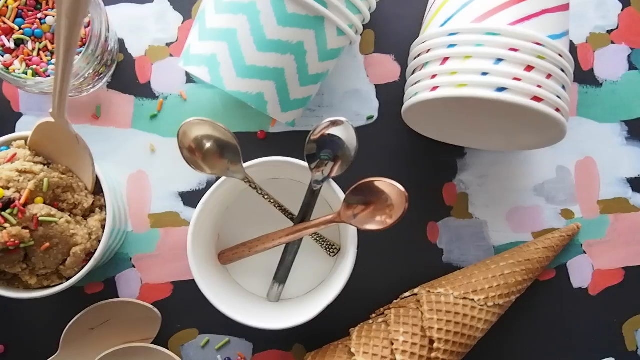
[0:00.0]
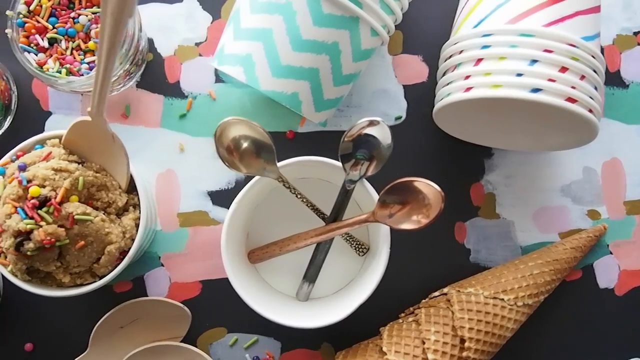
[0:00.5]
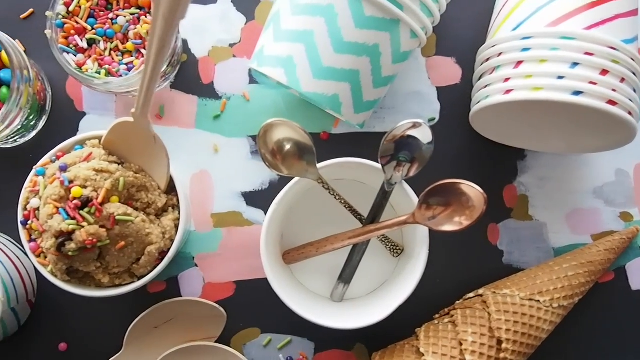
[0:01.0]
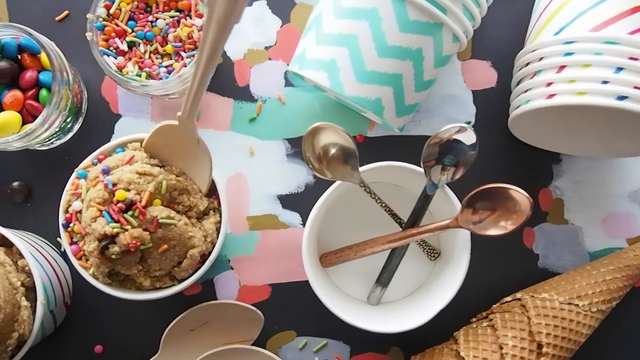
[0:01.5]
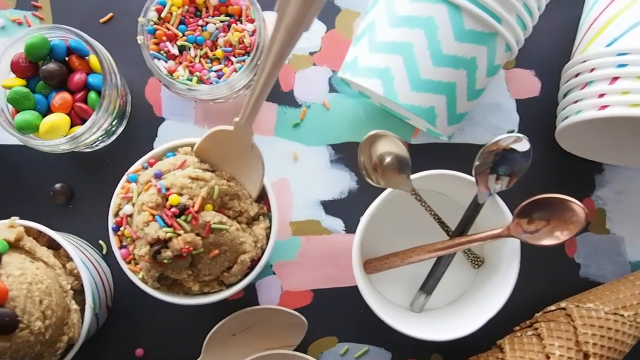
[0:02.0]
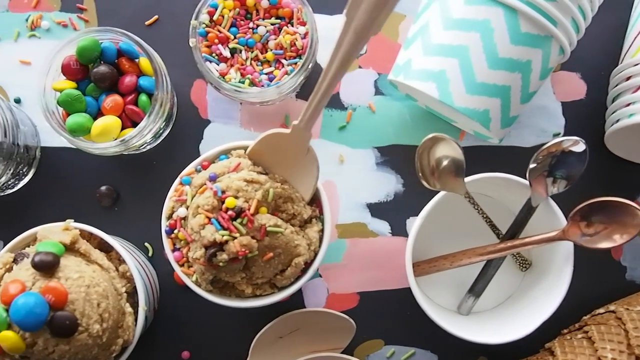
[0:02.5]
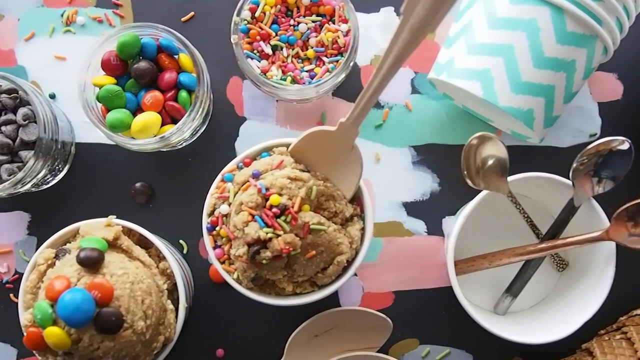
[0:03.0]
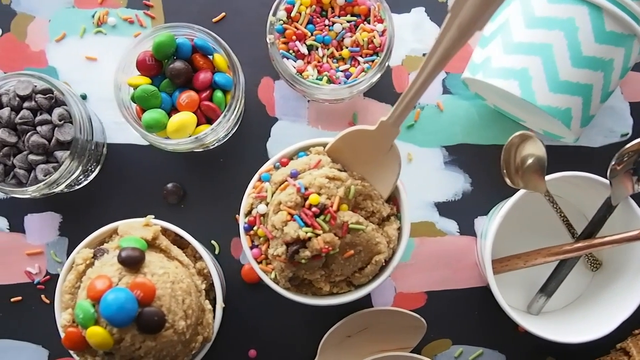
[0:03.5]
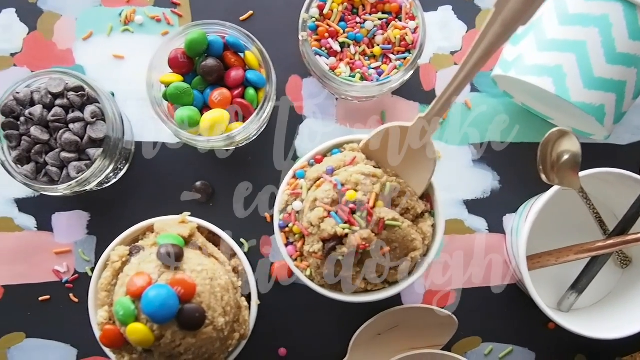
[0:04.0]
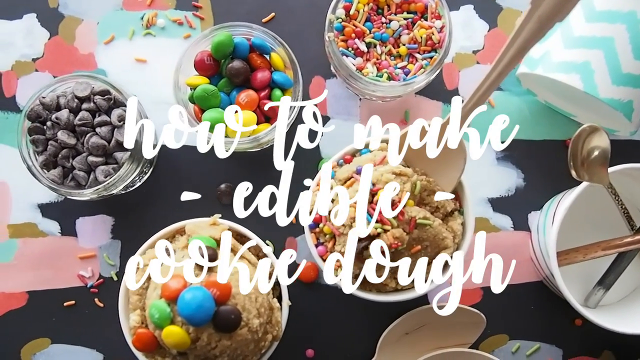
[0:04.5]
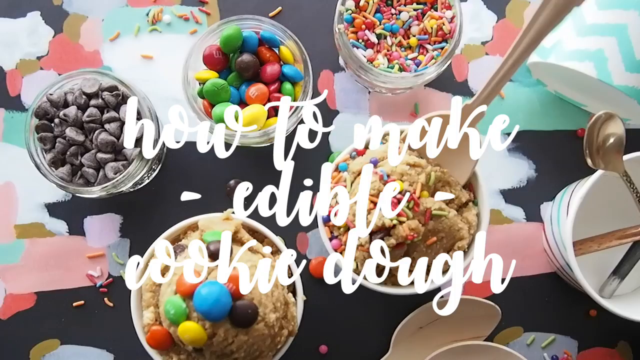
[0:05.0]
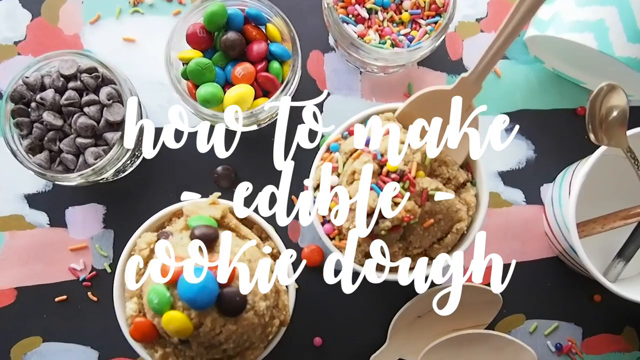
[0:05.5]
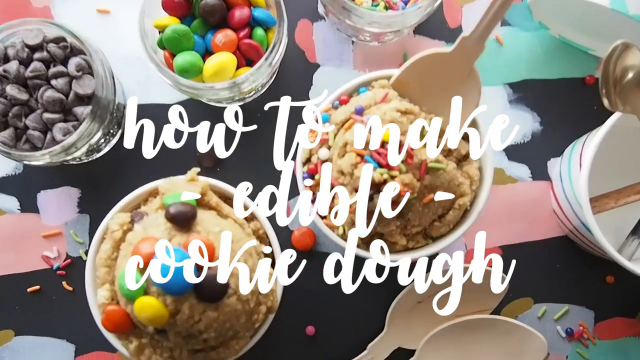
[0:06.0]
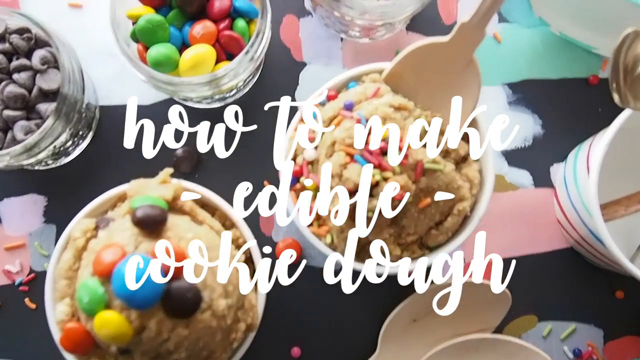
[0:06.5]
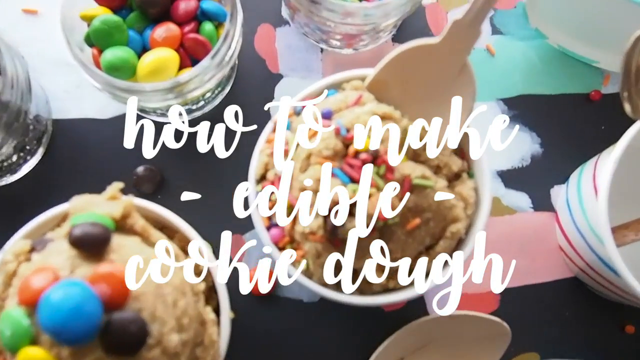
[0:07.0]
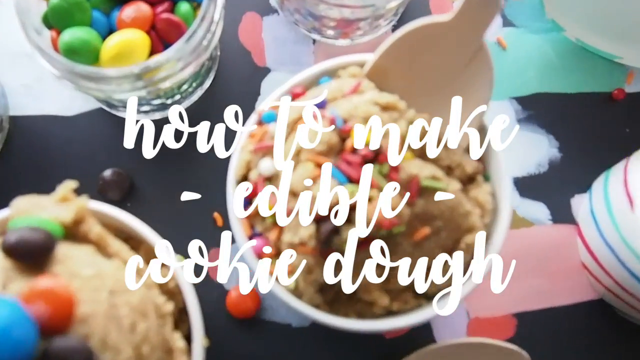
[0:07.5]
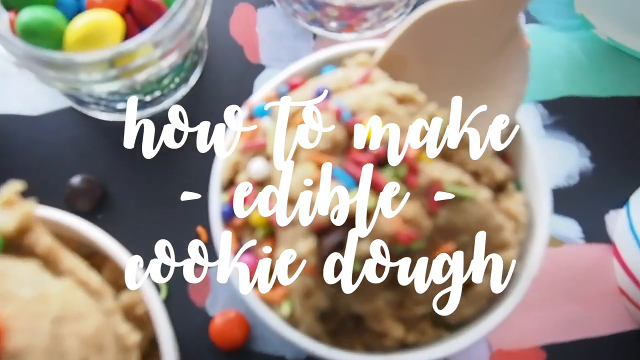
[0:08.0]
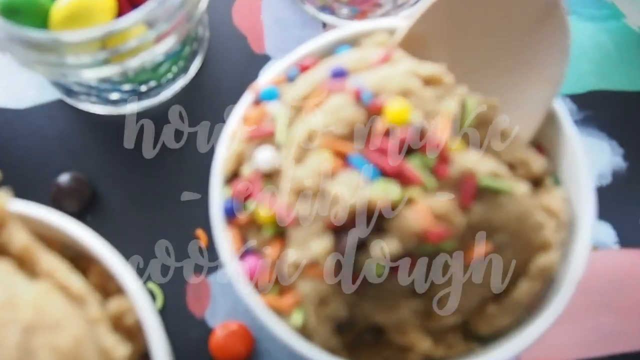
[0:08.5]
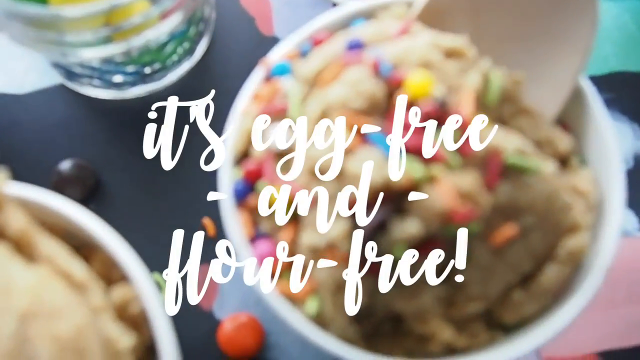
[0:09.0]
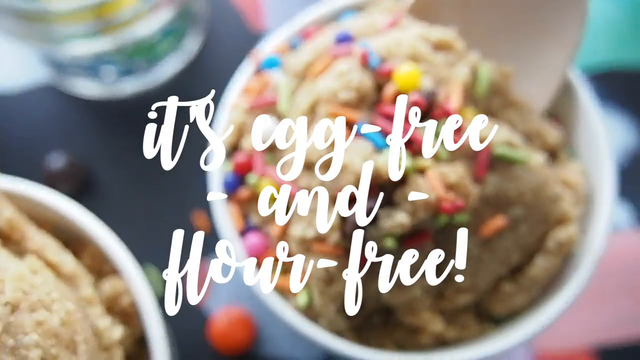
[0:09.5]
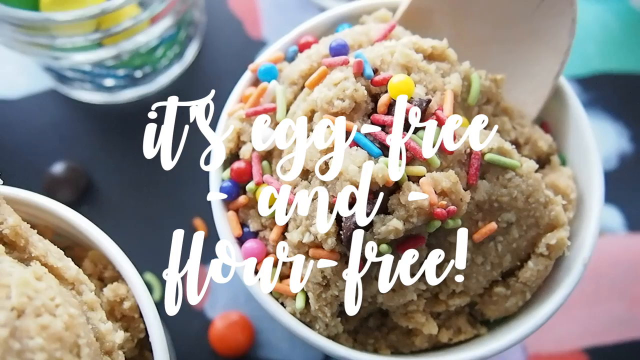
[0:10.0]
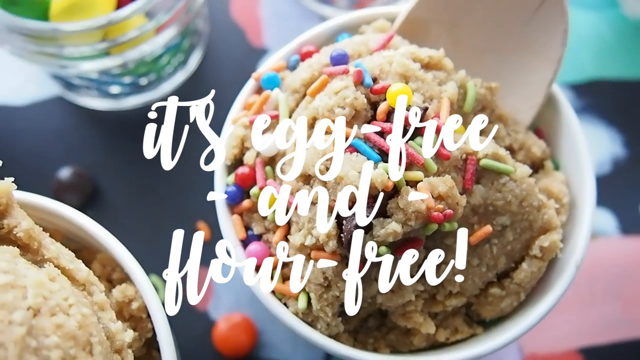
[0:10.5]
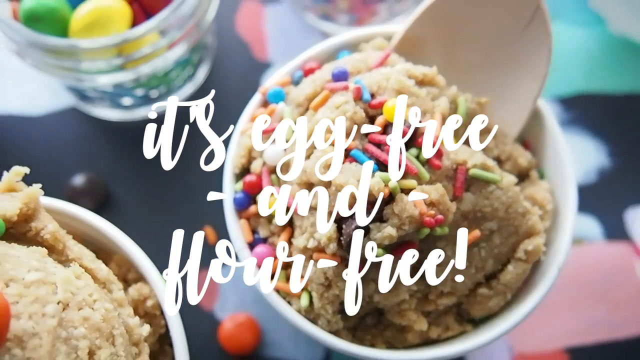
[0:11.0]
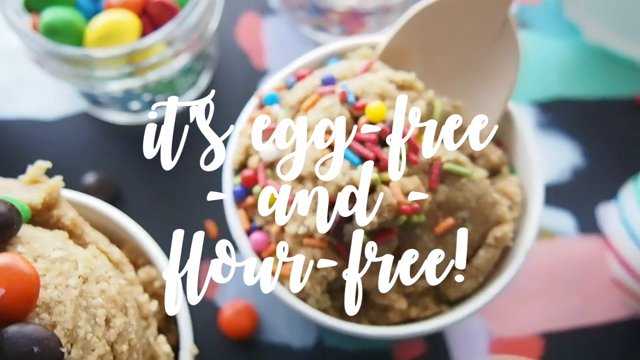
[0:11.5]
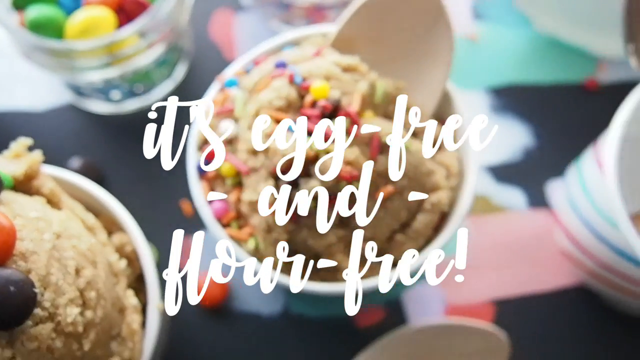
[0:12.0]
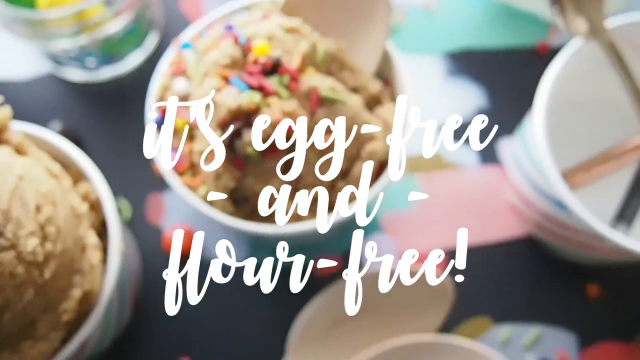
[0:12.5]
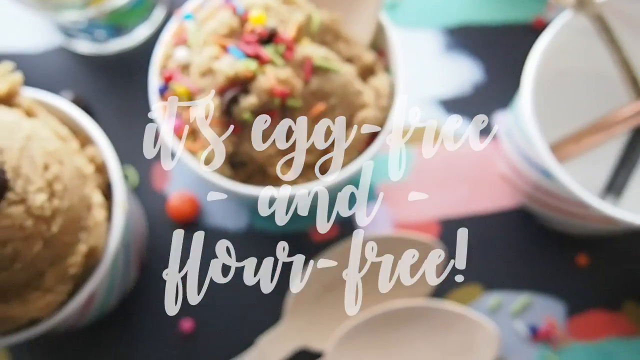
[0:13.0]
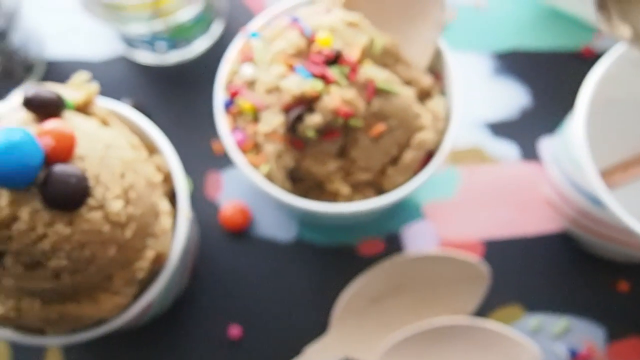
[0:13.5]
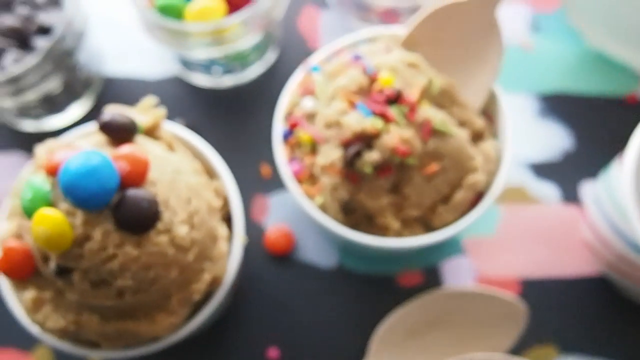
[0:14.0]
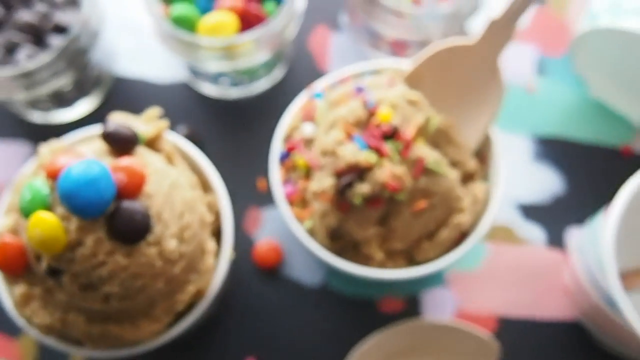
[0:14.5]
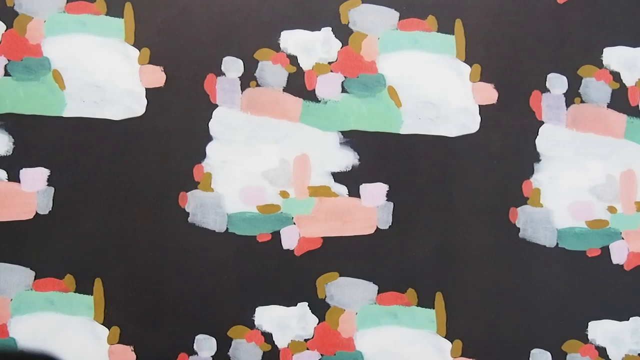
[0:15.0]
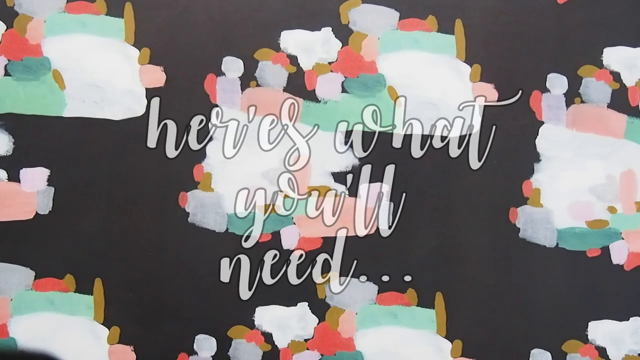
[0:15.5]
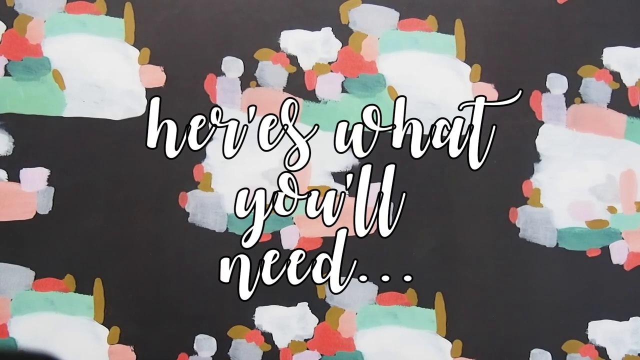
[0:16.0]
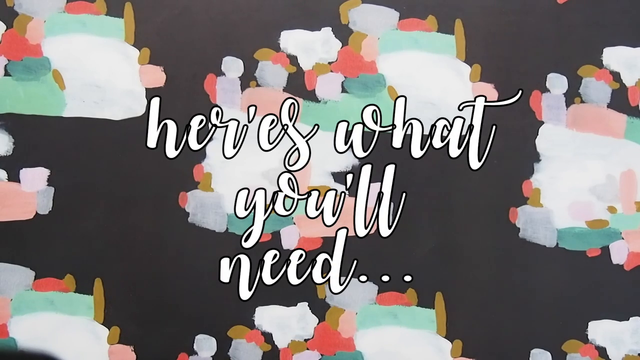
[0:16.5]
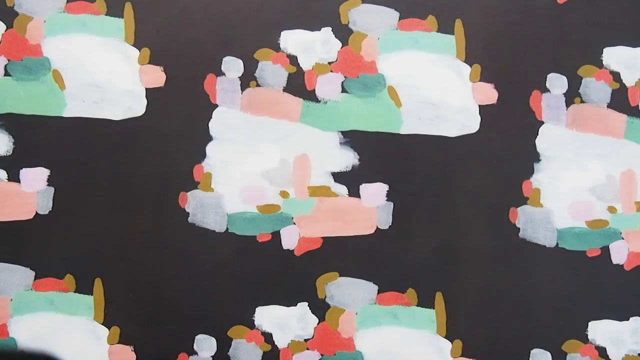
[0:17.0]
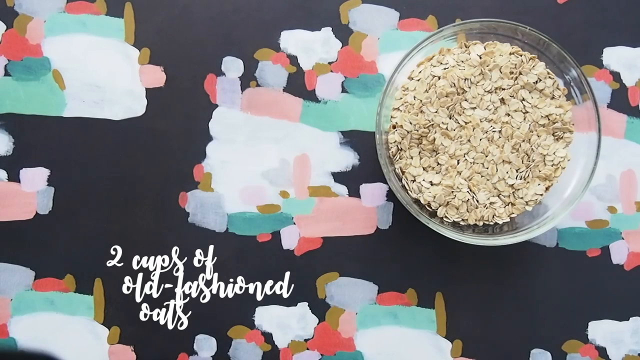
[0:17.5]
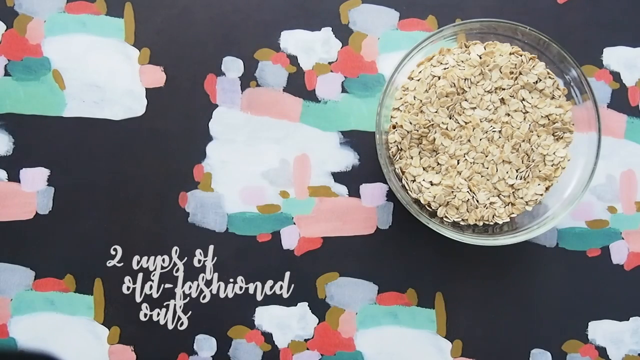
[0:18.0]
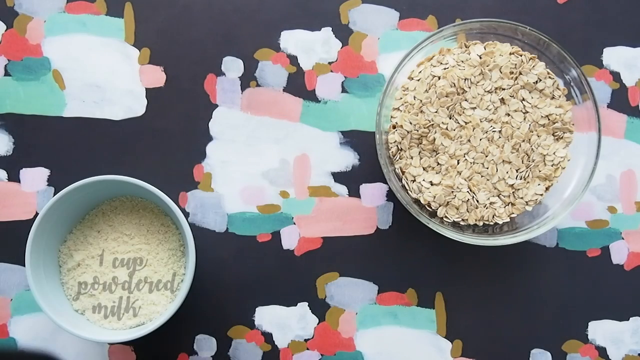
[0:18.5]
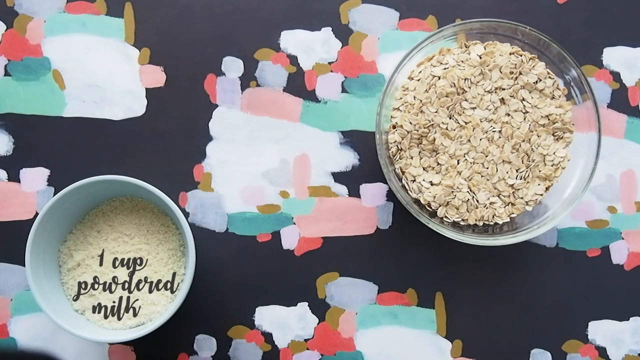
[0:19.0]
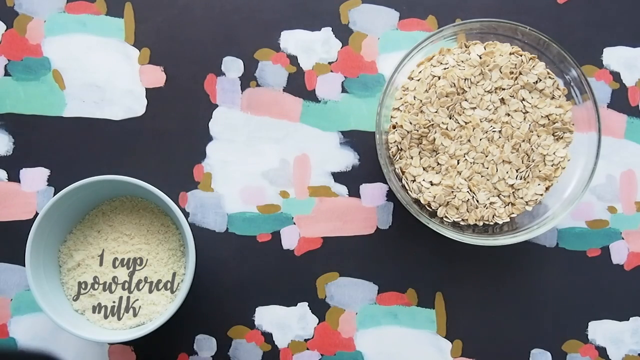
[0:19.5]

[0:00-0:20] The video opens on spoons in a cup, then plastic cups. A cup is filled with food and sprinkles, and another cup is filled with sprinkles; a spoon has been inserted into the plastic cup of edible dough. Corns are laying on the table along with sweets, treats and sprinkles. The title "how to make edible cooking dough" appears on screen in white. The camera zooms in on an item in a plastic cup, with the spoon and the sprinkles visible. More text appears: "egg free and flour free", then "here is what you'll need", followed by two cups of old fashioned oats, shown as a glass bowl of oats, and one cup of powdered milk, shown in a cup.